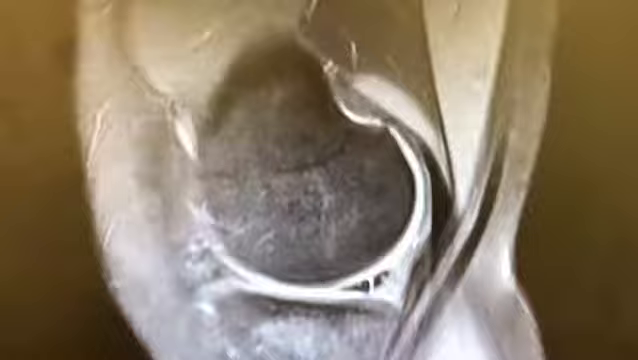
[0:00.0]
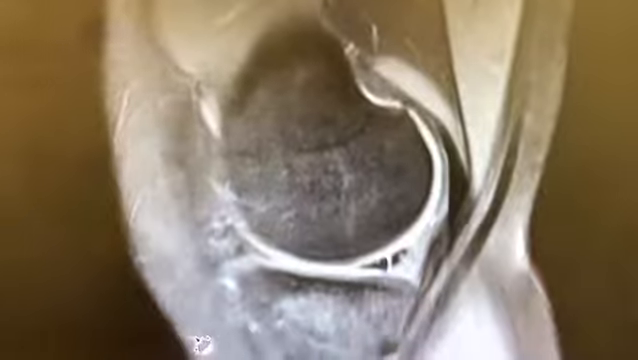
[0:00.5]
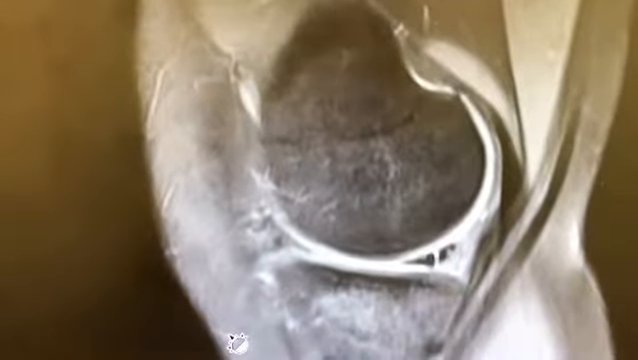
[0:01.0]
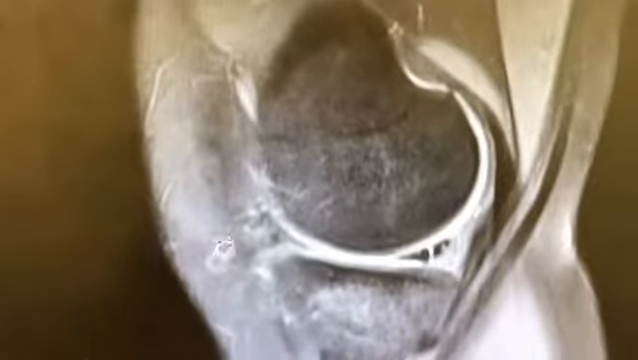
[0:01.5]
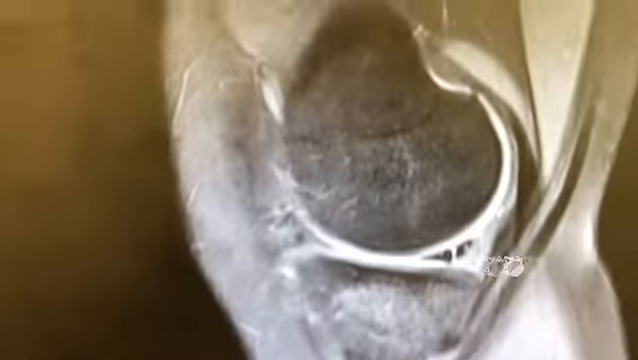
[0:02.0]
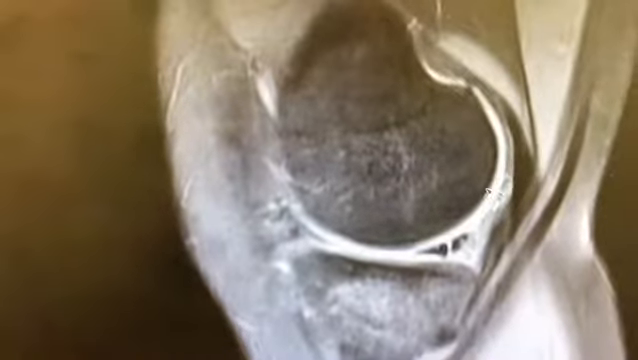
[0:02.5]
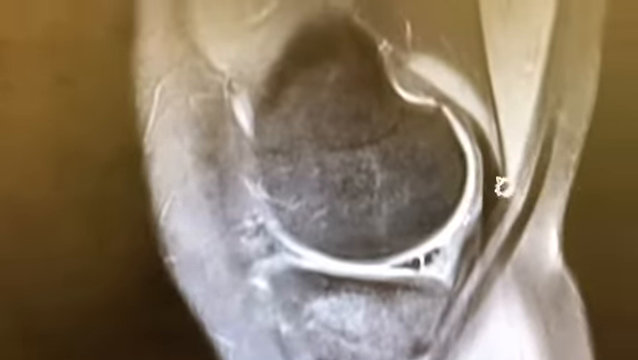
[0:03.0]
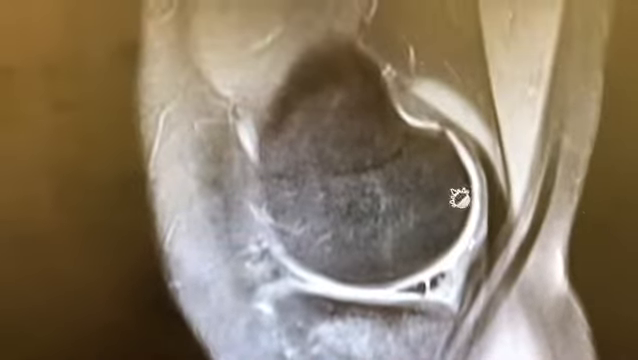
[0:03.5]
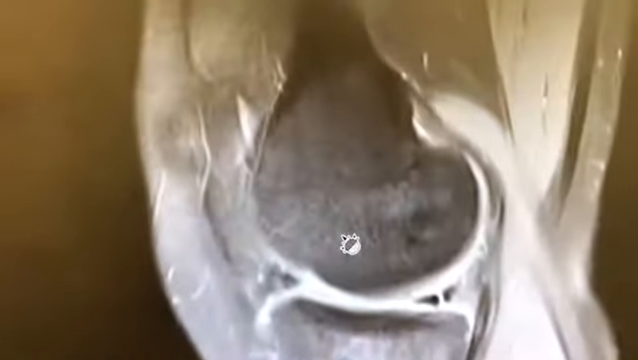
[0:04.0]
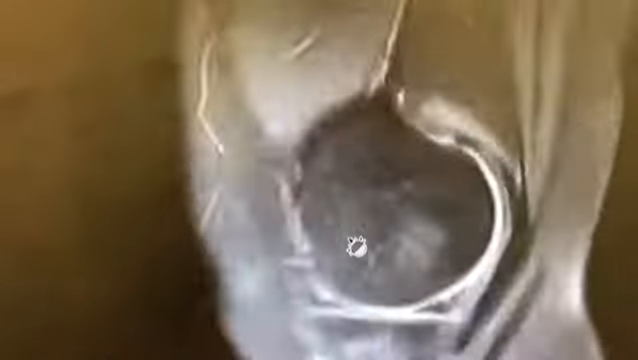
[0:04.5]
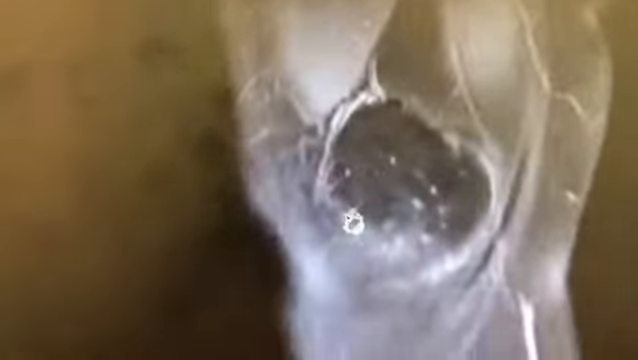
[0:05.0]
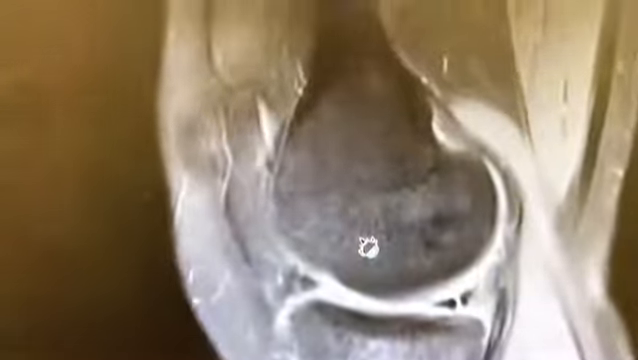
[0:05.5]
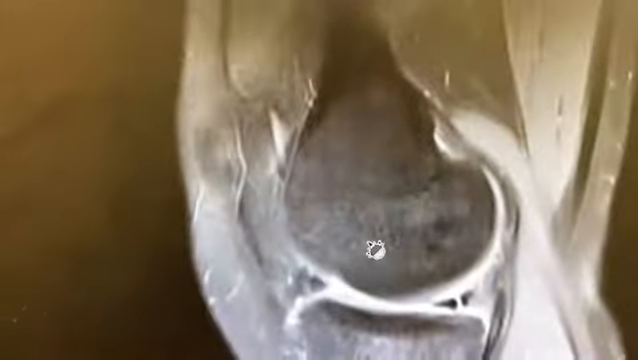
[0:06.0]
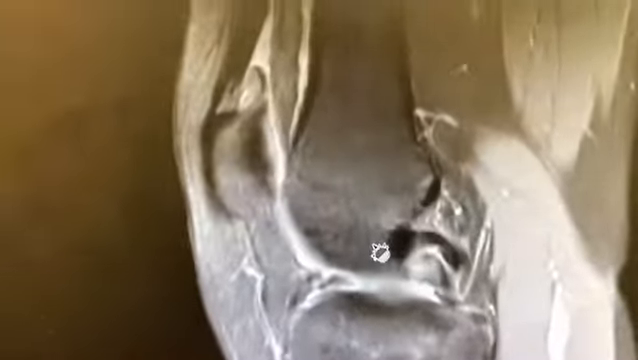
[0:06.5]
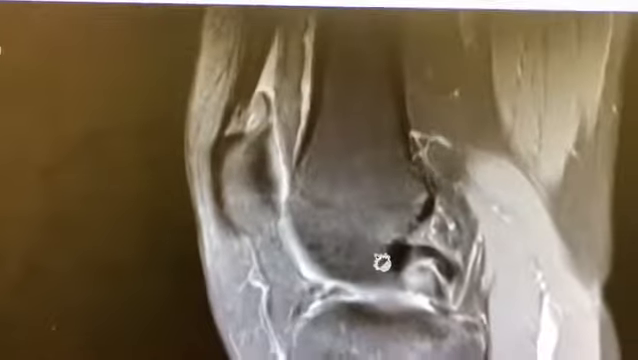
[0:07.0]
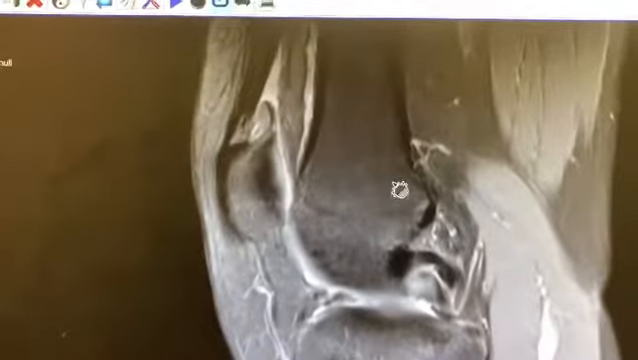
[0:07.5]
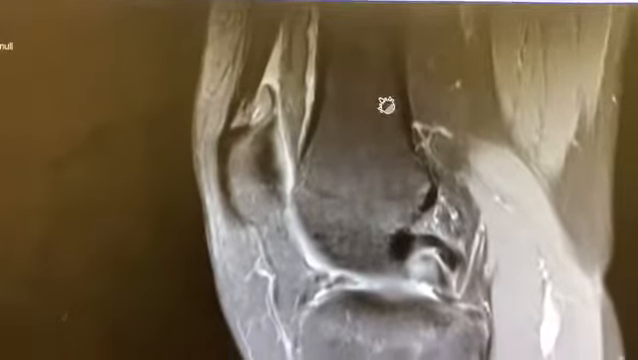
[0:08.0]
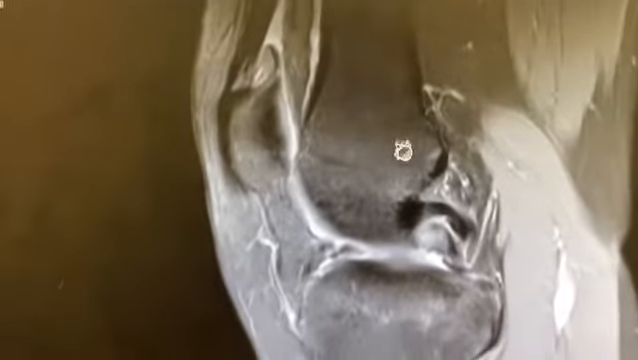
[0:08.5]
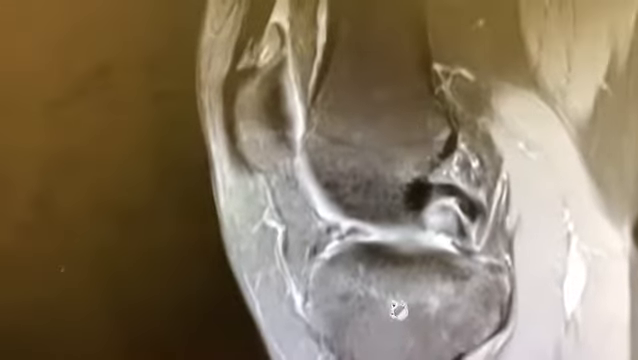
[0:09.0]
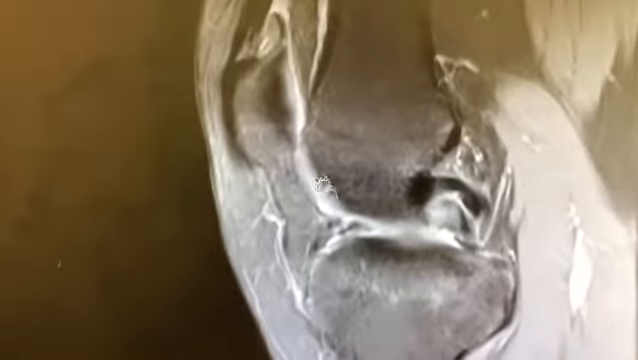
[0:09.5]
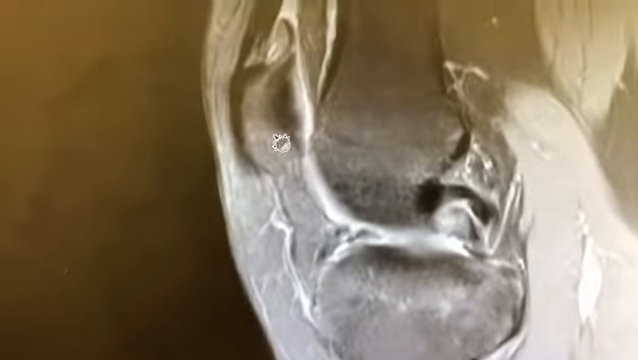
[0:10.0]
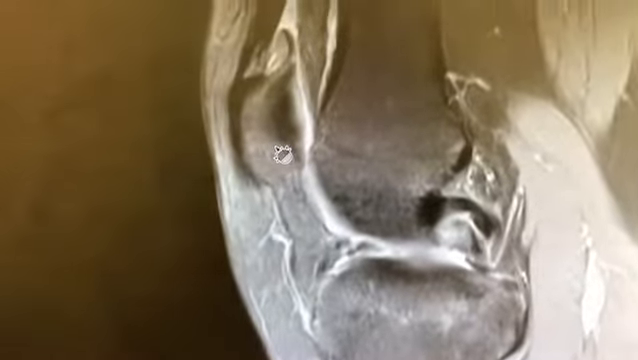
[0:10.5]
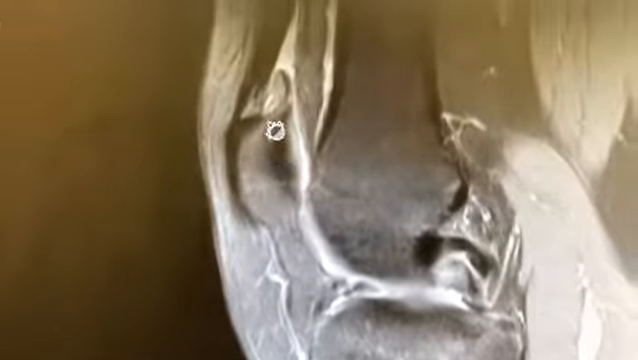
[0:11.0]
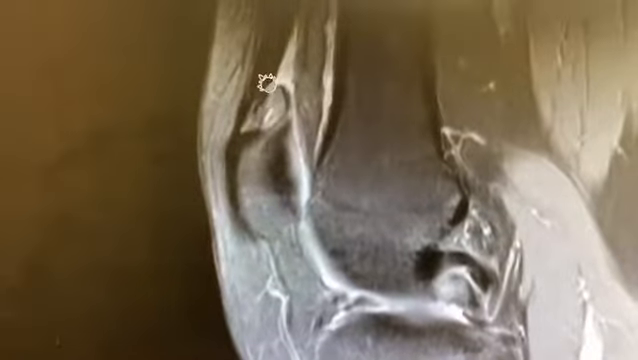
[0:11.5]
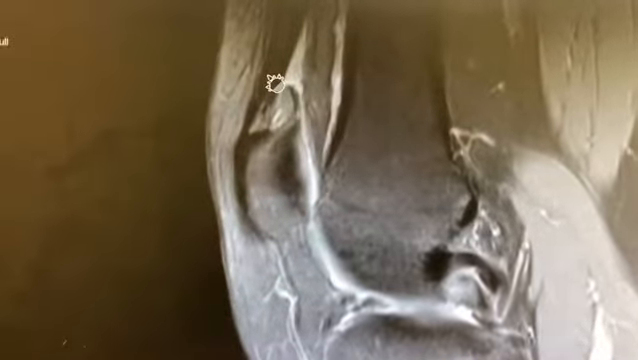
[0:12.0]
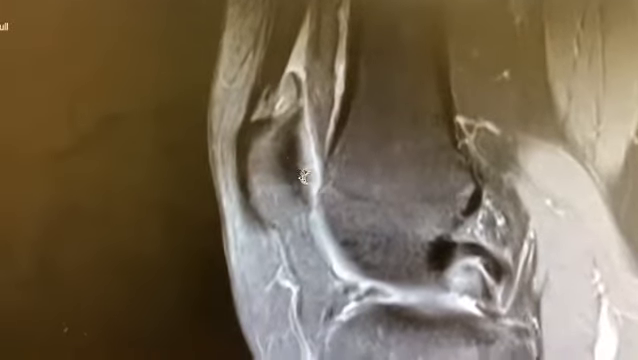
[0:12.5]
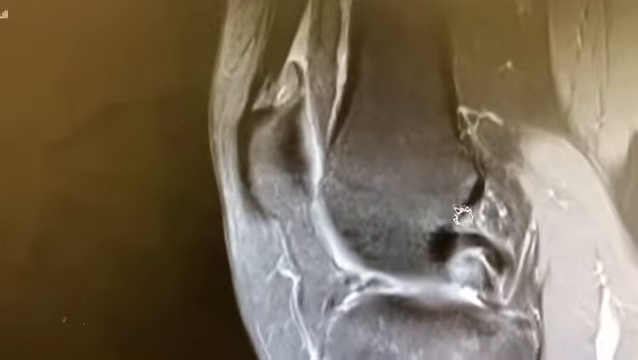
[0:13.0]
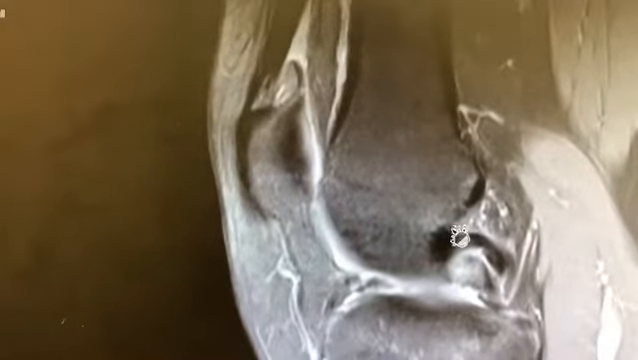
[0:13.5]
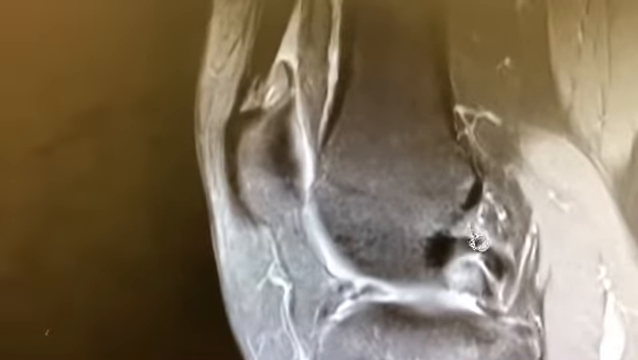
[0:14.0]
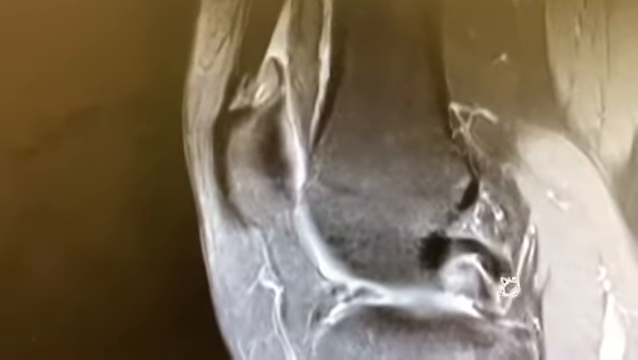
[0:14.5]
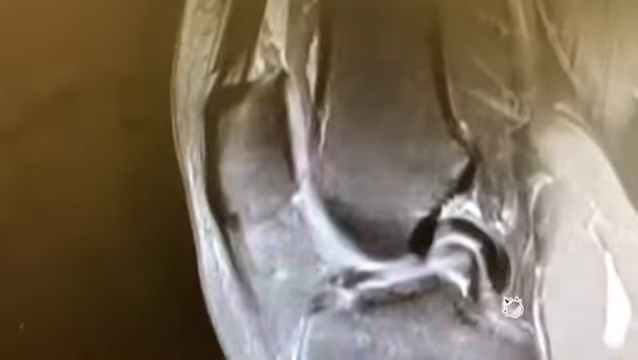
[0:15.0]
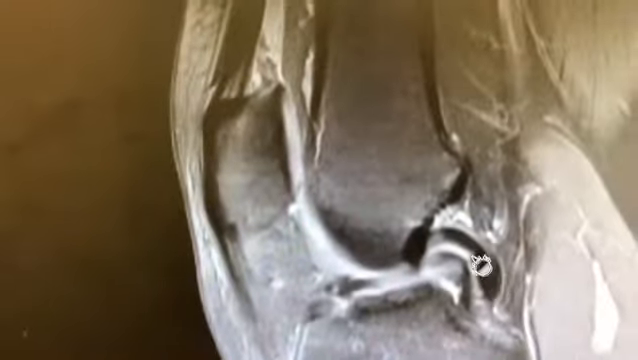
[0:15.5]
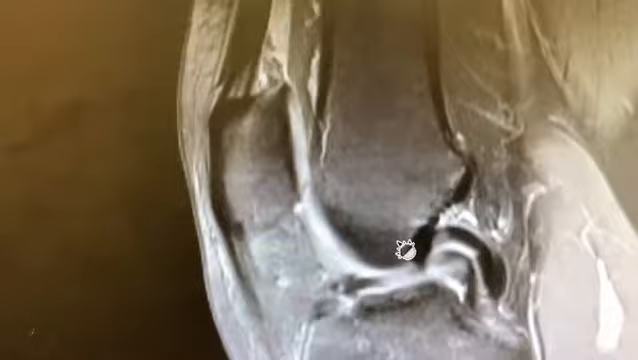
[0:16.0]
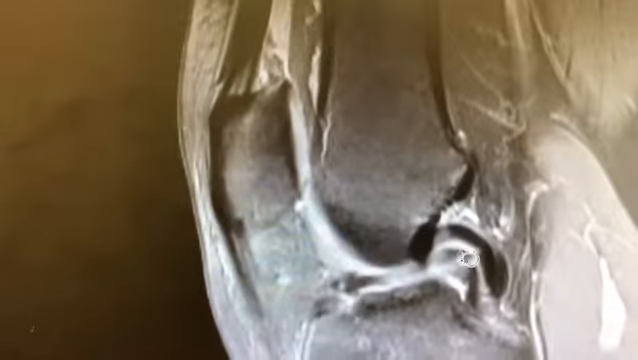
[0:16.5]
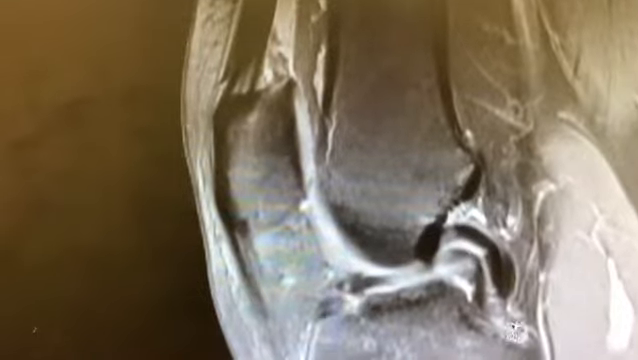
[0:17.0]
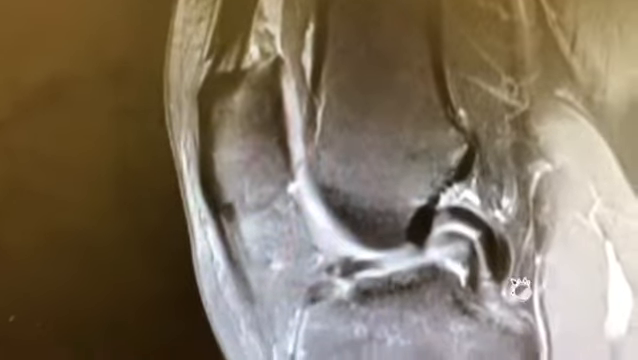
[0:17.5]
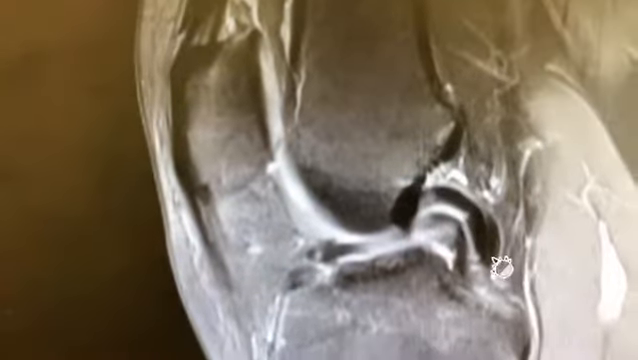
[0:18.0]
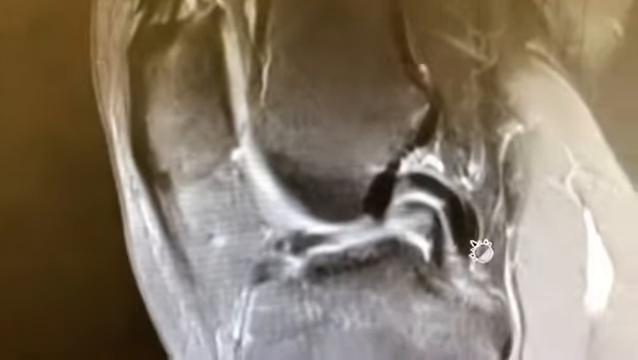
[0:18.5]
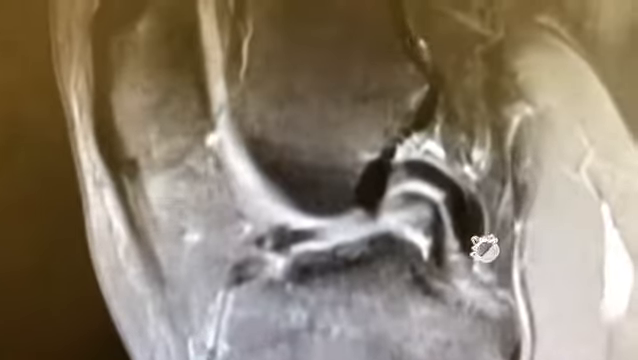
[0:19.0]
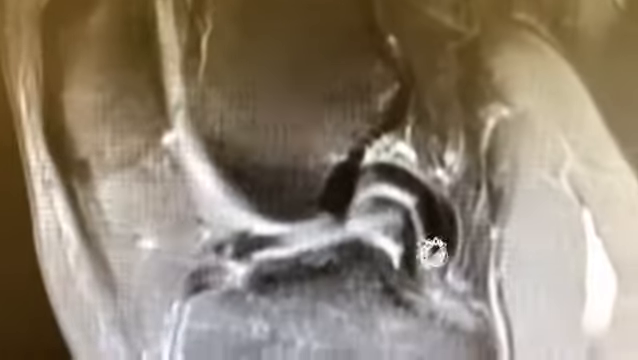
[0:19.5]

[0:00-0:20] An MRI or x-ray of a knee is shown, and it seems to be a recording of the MRI or x-ray taking place. A gray hole-like area appears to be the joint in the knee that helps it bend, and a white line appears to be wrapped around the bottom of this joint, indicating either muscle or cartilage. A mouse pointer moves around the screen and circles around the joint, indicating certain areas in the knee. The knee then appears to move around, which moves the joint and the cartilage. The joint appears to have gotten slightly smaller, and the video zooms into an area of the knee where the joint is: a black curvature indicating a possible injury, with cartilage around it. As the video zooms into that small black curvature, the mouse pointer is focused on the area around the joint.